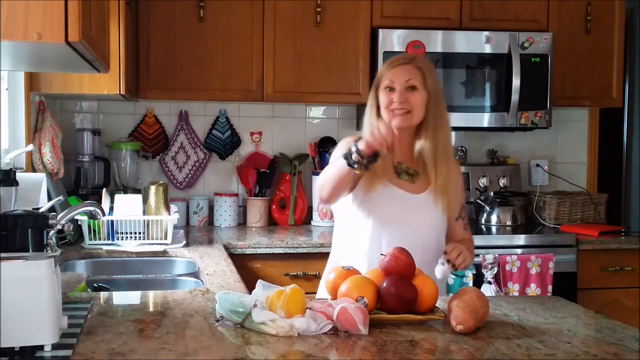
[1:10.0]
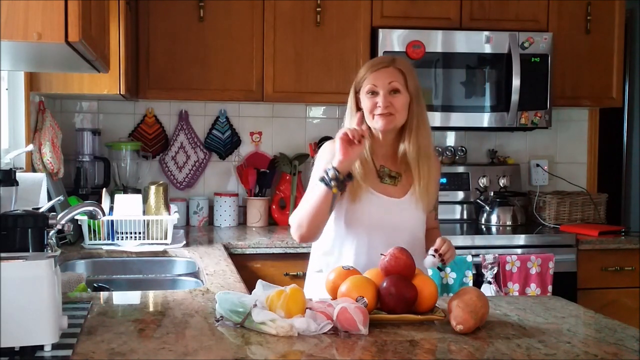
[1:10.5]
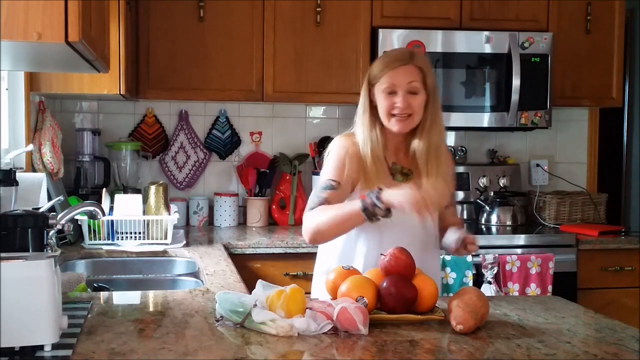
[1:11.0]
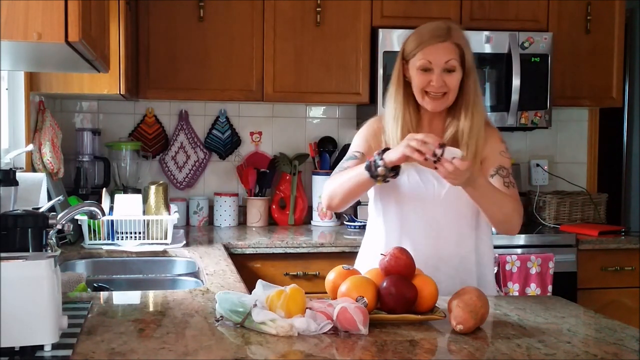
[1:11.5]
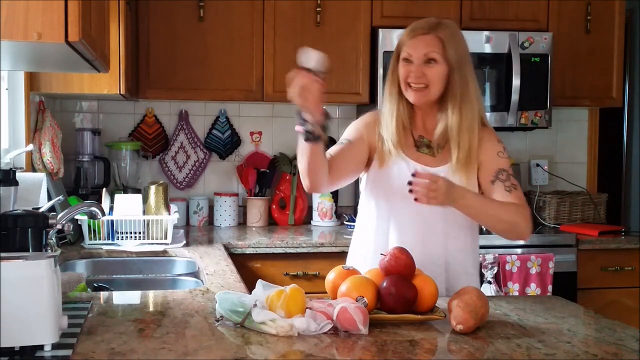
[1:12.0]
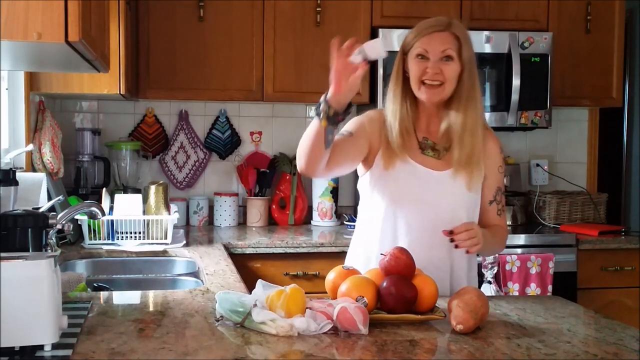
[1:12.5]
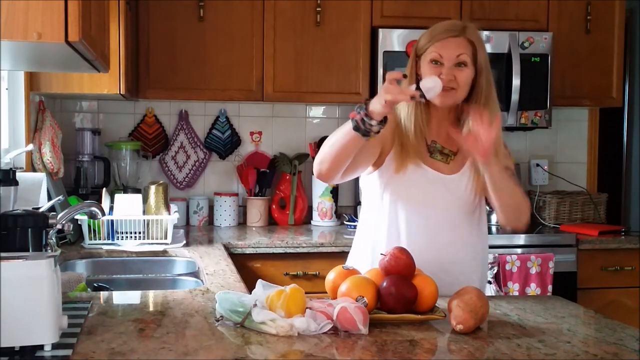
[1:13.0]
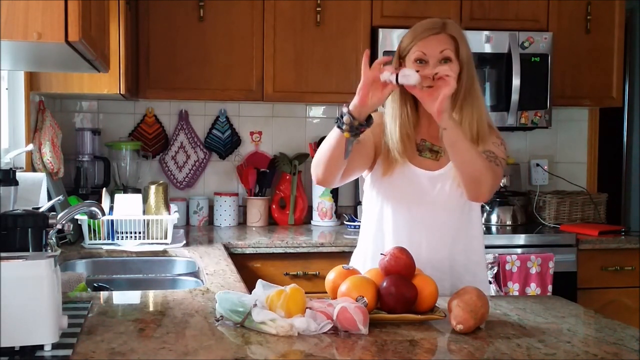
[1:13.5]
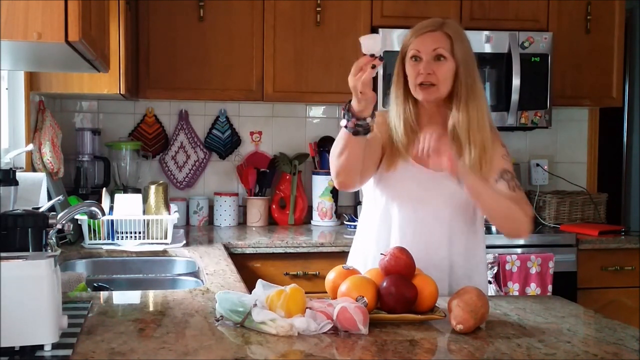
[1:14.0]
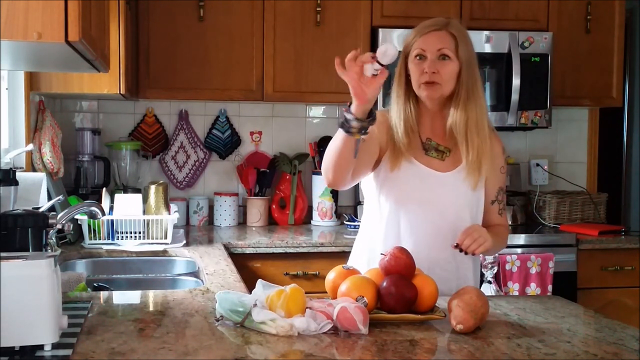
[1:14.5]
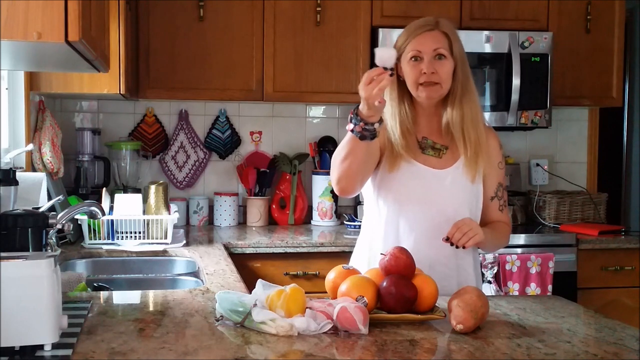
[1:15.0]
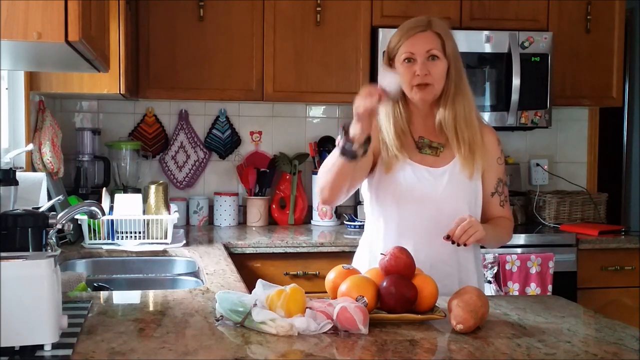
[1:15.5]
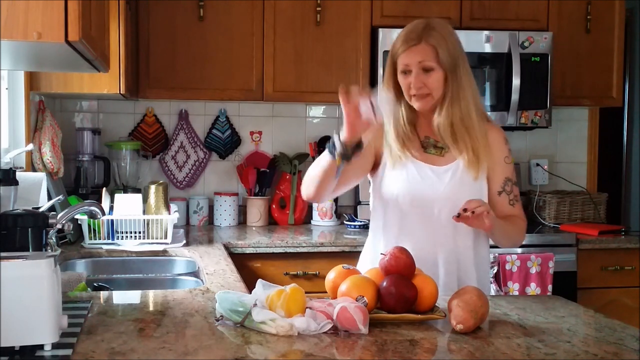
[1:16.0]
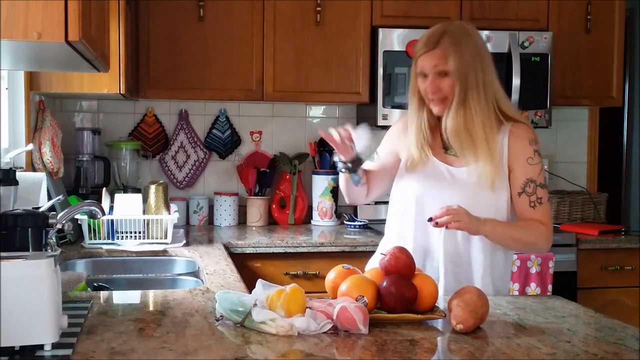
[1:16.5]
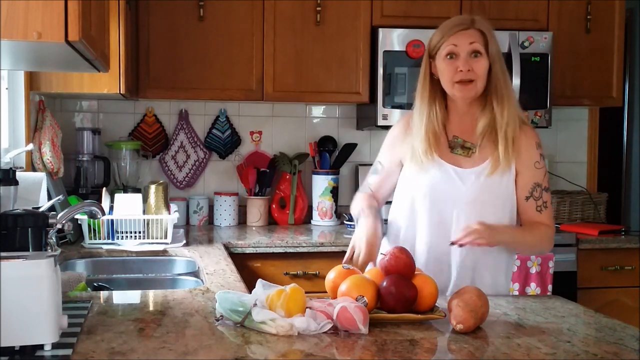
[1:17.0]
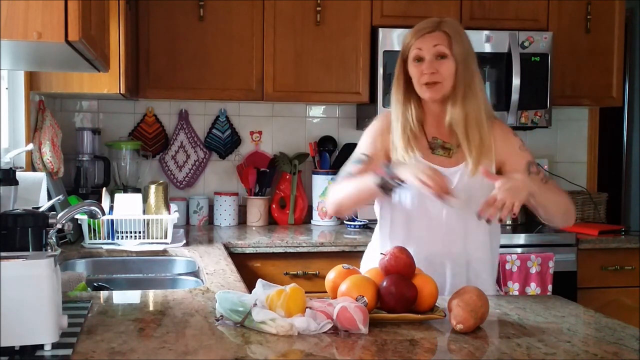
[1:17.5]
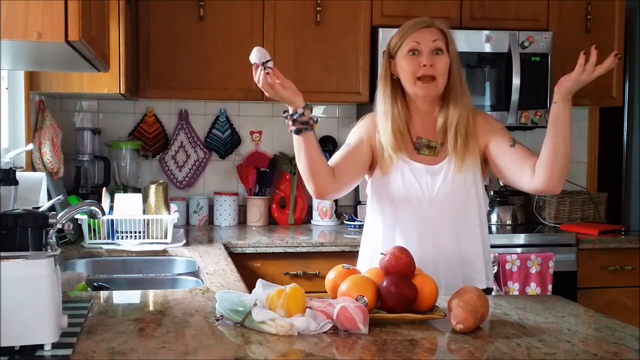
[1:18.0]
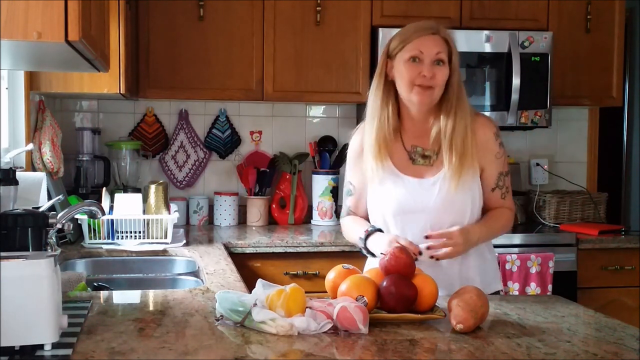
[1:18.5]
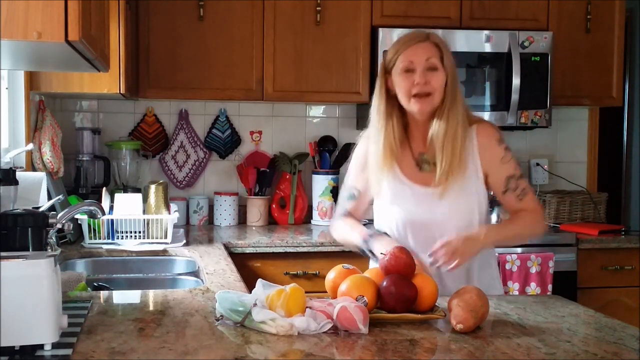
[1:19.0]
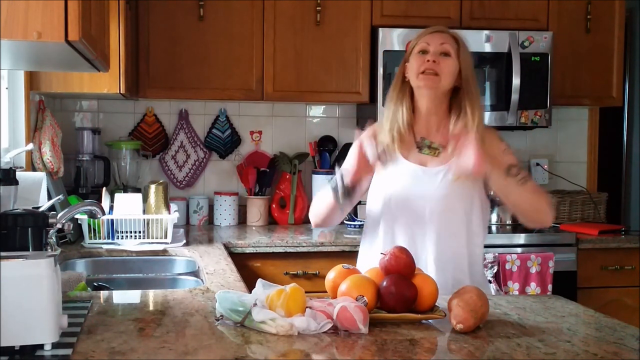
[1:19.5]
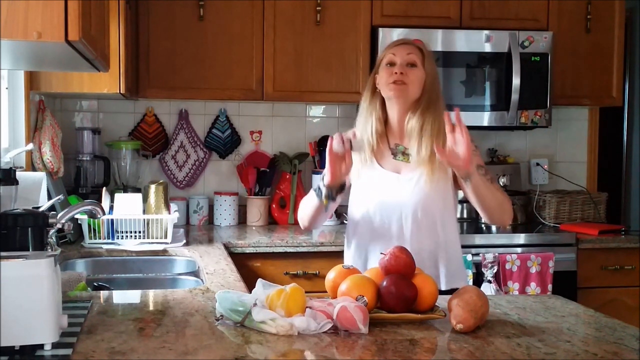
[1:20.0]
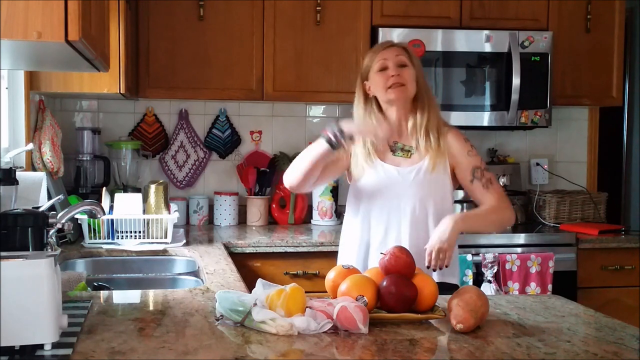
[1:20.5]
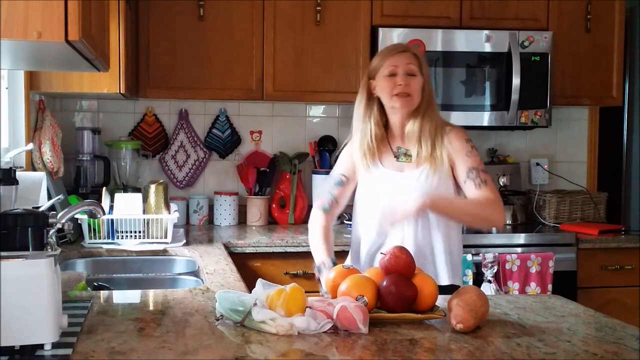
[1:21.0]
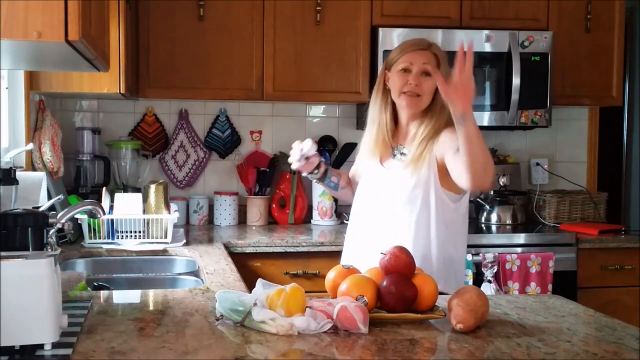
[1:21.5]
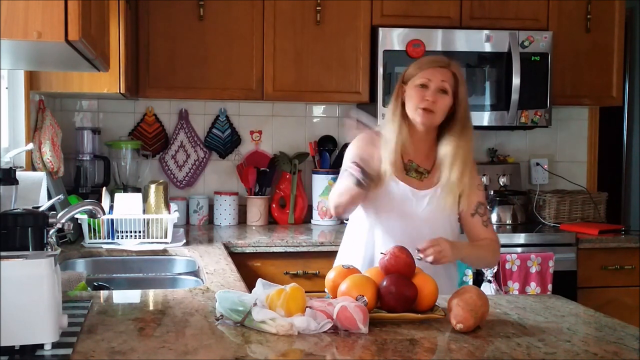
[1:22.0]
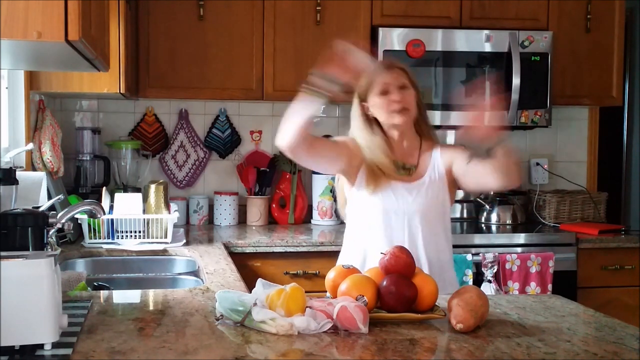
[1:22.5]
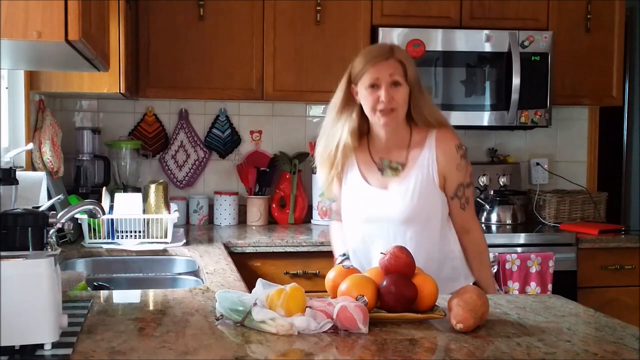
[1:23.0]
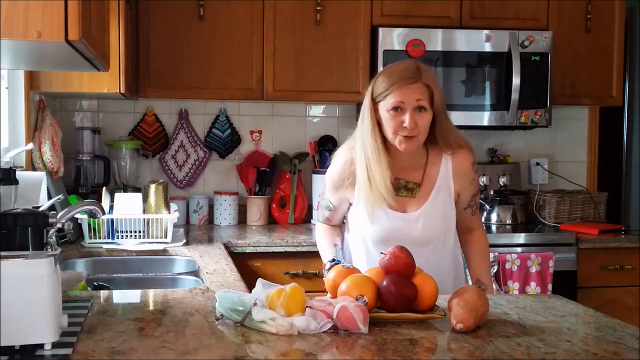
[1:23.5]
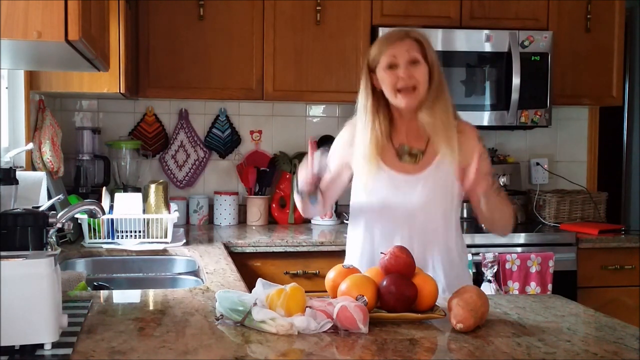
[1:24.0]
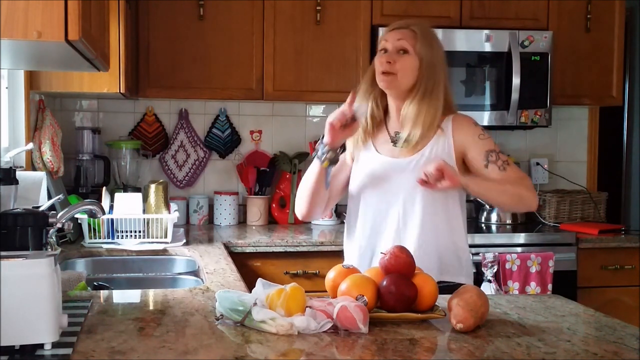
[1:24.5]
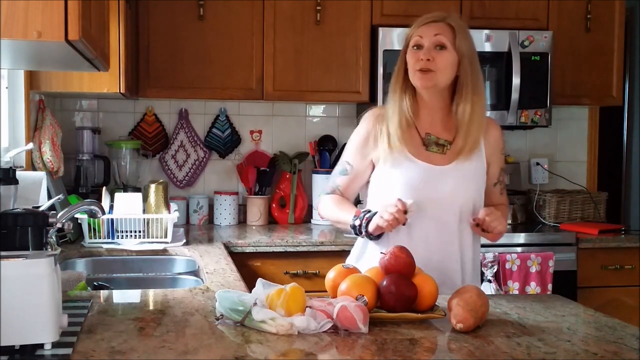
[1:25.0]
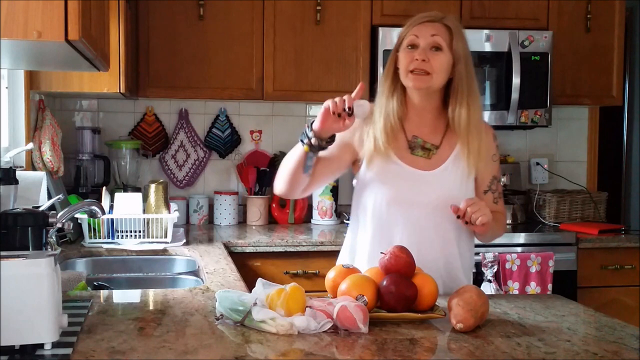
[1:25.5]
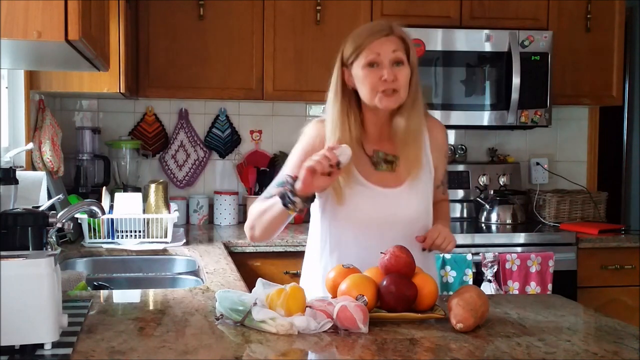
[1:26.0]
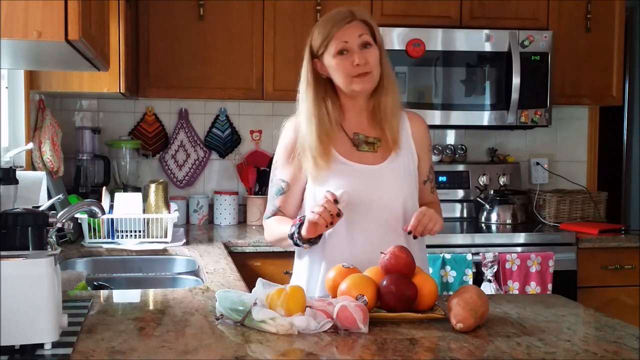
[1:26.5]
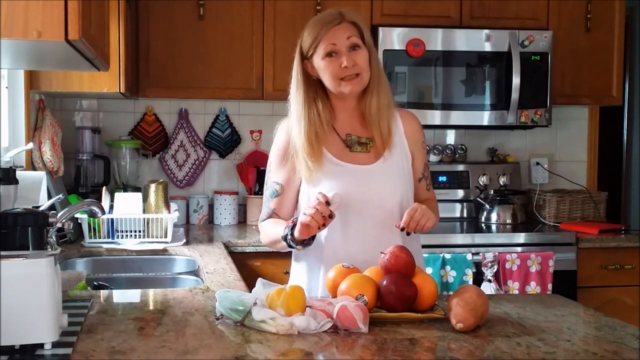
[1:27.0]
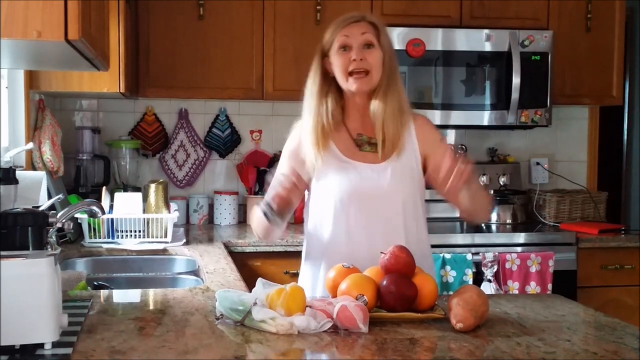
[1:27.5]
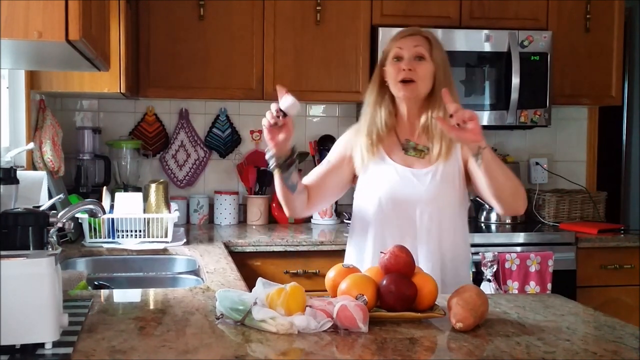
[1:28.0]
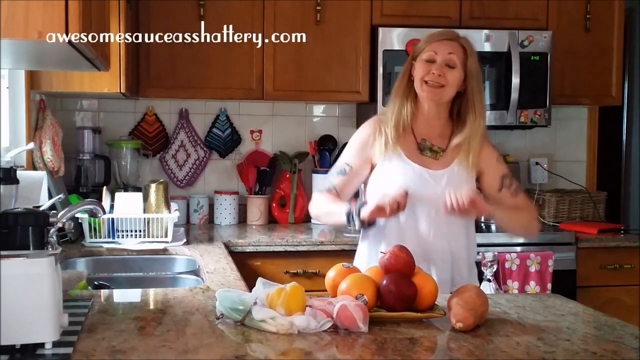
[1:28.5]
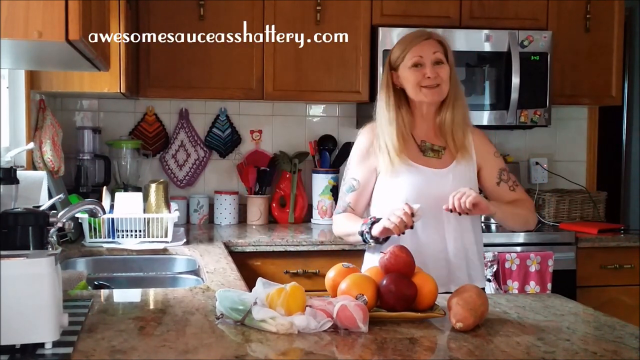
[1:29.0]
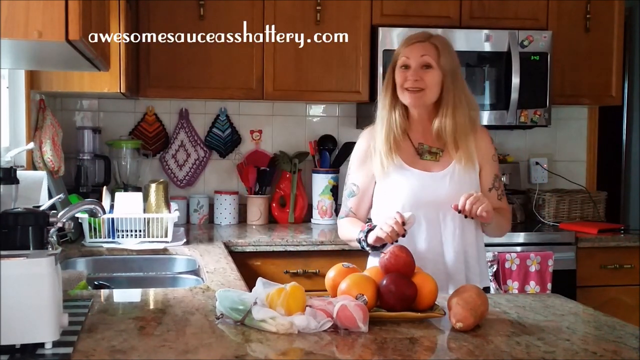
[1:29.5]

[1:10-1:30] The woman seems to have made it home and brings out her bag. She speaks and shows that the reusable bags are easy to fold up and put away. She seems very energy-filled. No cooking takes place. Text beginning "awesome sauce" appears, seemingly her brand.